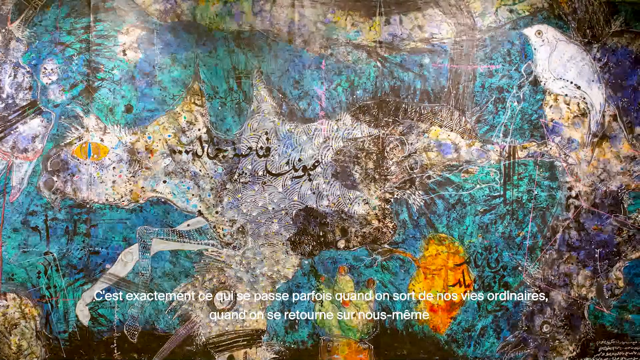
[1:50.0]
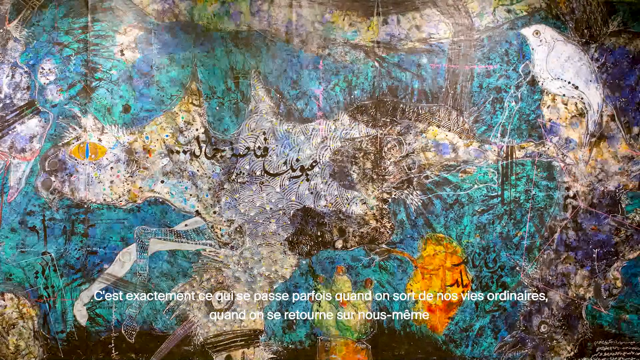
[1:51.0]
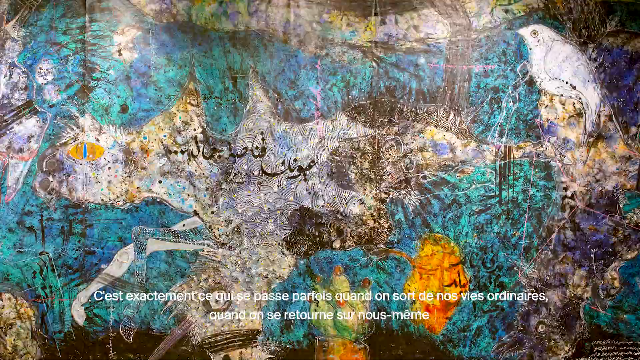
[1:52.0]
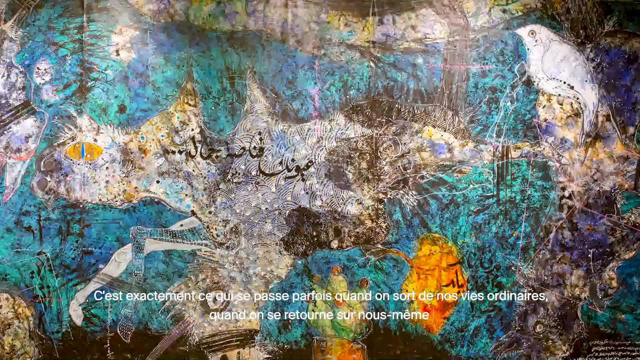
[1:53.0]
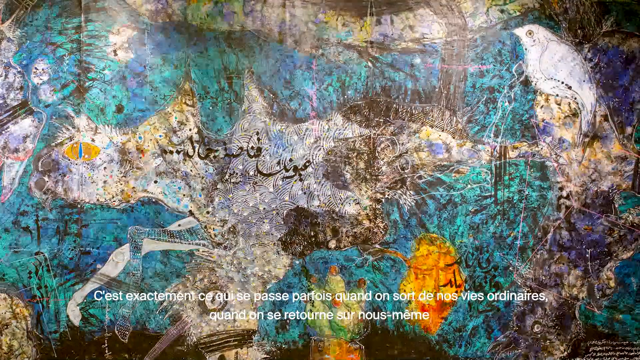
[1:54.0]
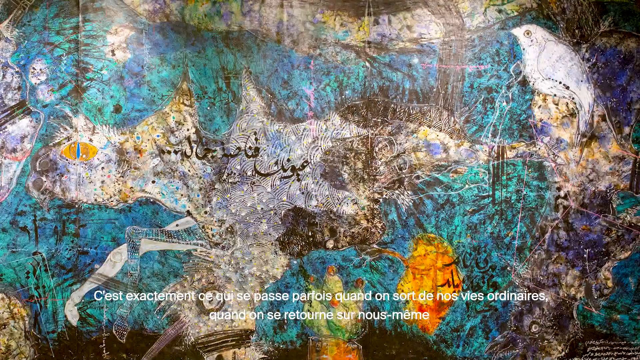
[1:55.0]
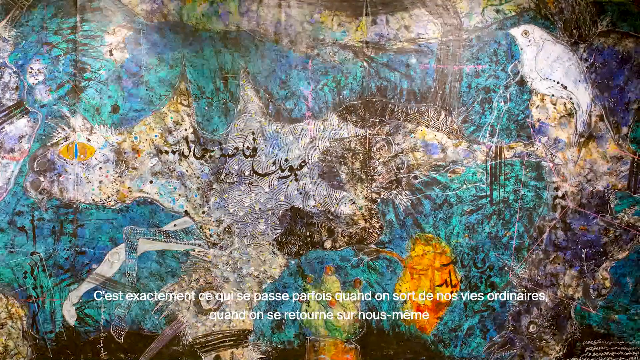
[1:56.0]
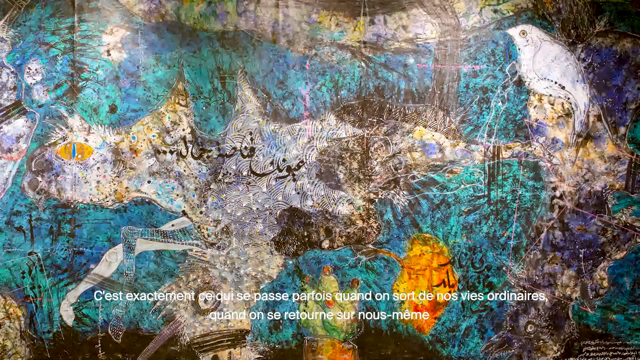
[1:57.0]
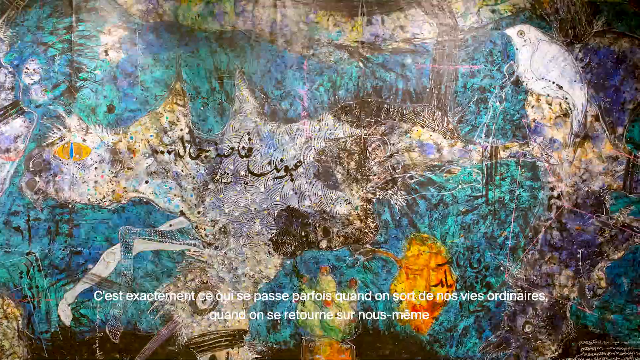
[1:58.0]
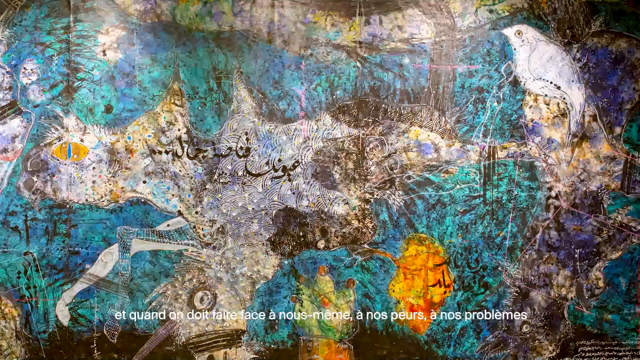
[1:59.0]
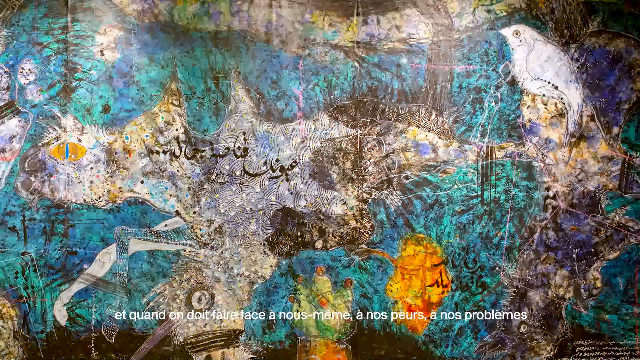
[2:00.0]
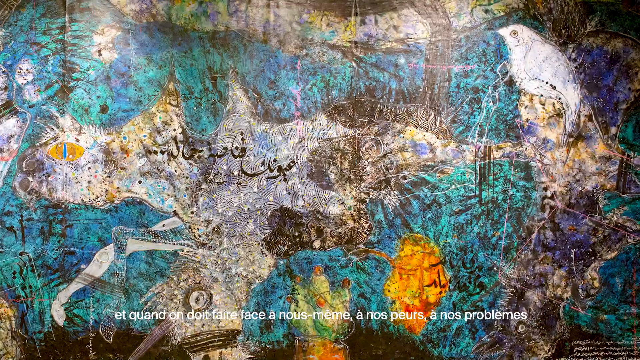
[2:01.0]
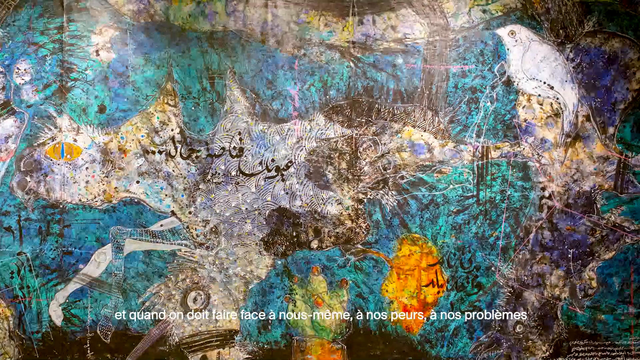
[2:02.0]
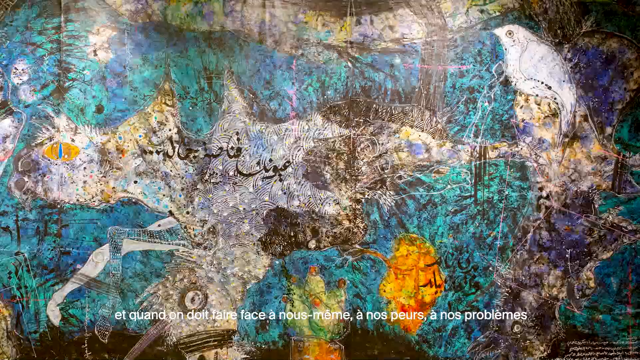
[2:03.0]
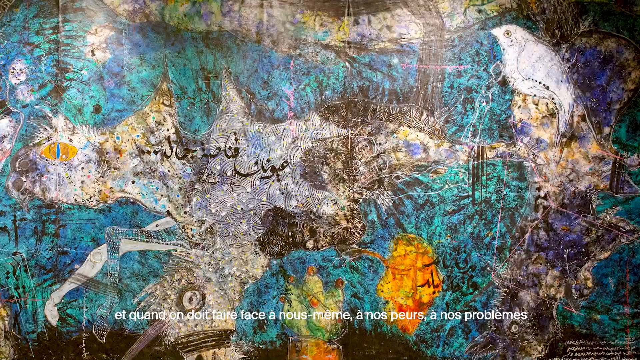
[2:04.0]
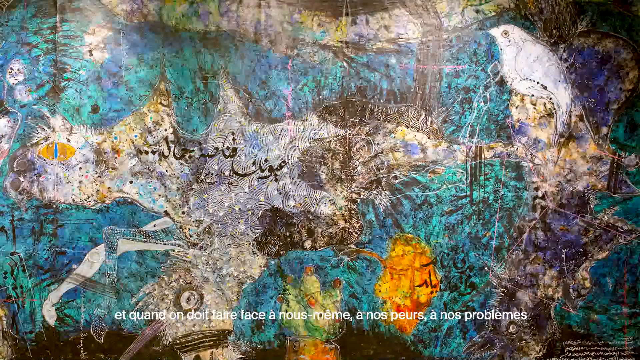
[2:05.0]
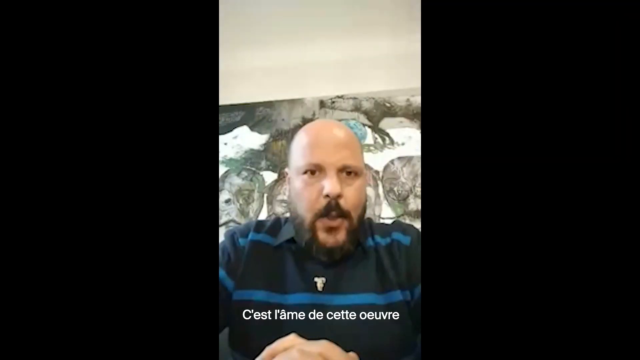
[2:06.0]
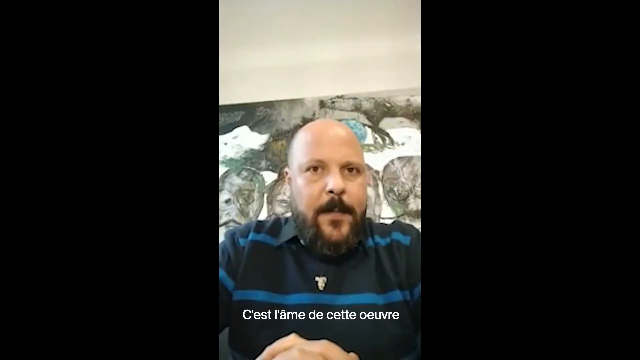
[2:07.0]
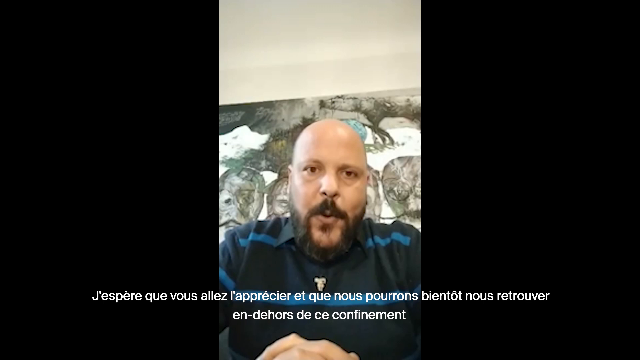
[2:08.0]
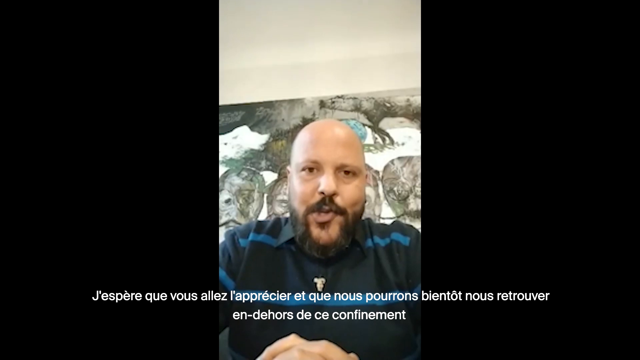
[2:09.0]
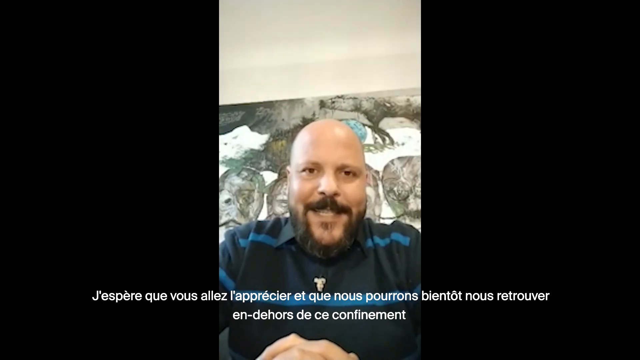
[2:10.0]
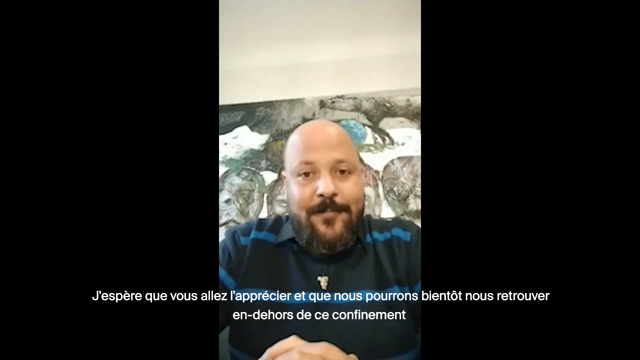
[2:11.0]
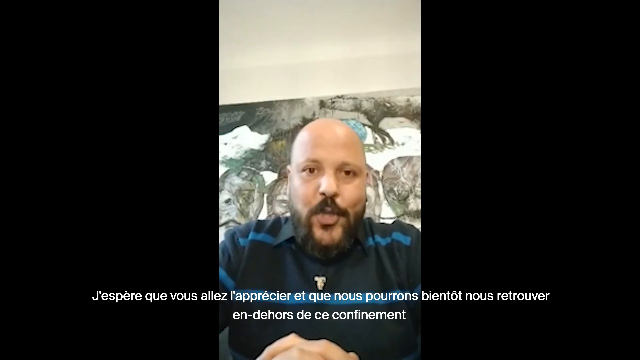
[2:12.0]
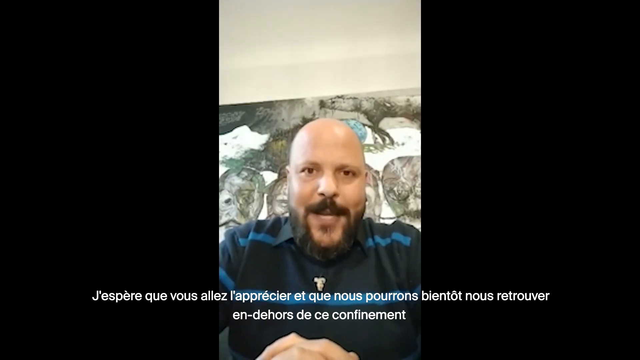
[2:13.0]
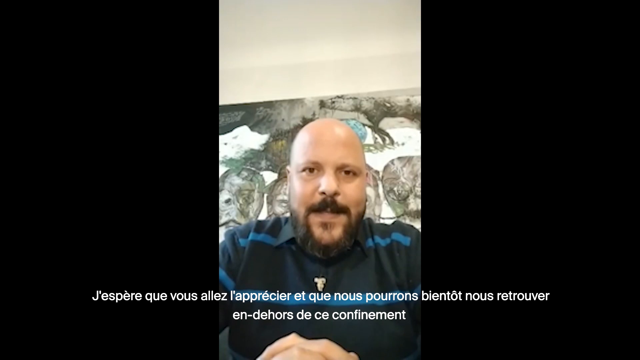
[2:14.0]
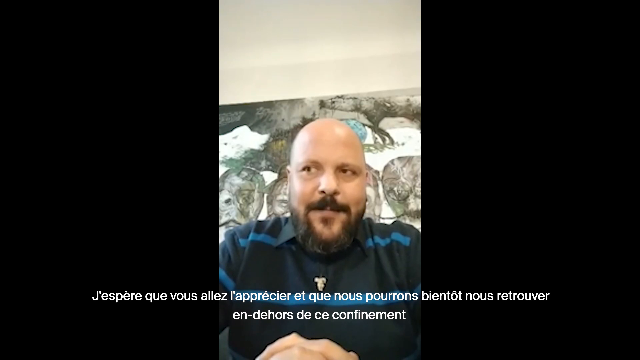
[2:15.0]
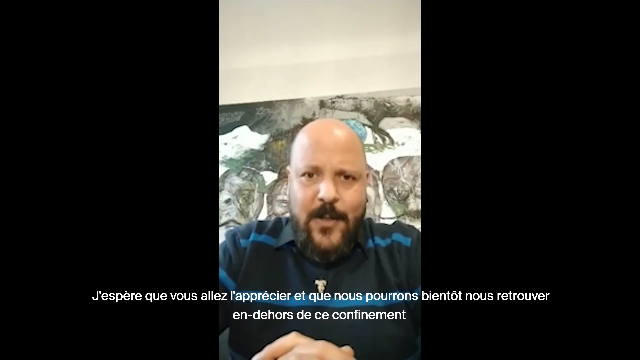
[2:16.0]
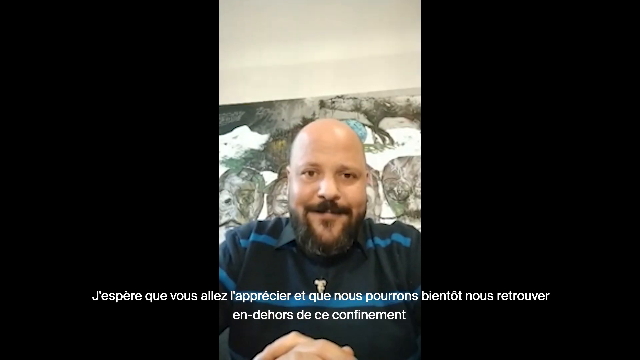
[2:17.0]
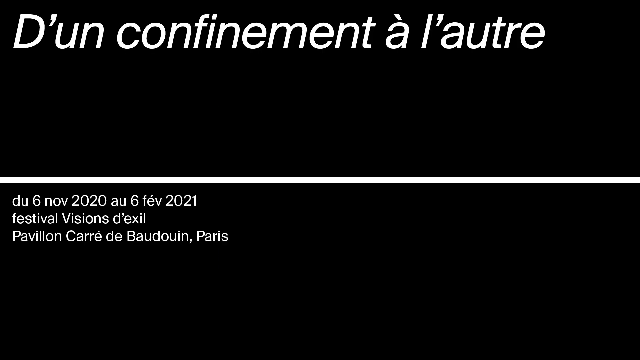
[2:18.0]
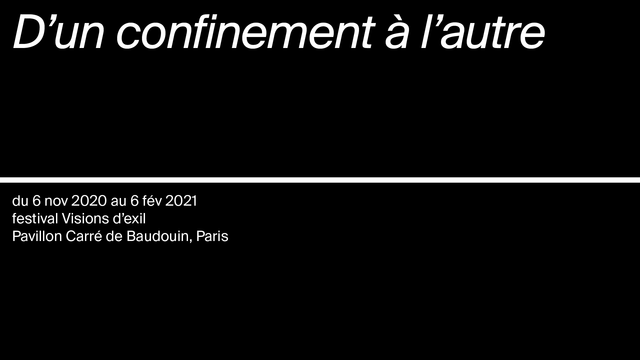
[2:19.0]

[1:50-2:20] Some sort of painting or artwork, which appears large, is presented, with the camera staying on it. The video then cuts to a man who looks like he is recording himself on some sort of device, speaking to the camera; he appears to be on a cell phone or computer, like a video call. He is either being interviewed by somebody or made the video himself. There is also a 12-minute call to a woman. Subtitles in a different language appear on the screen. The video then cuts to an ending credit scene.